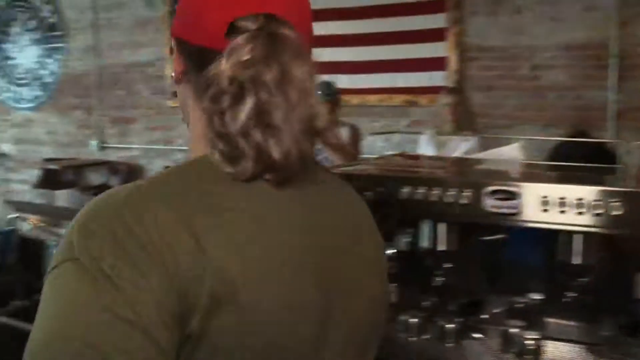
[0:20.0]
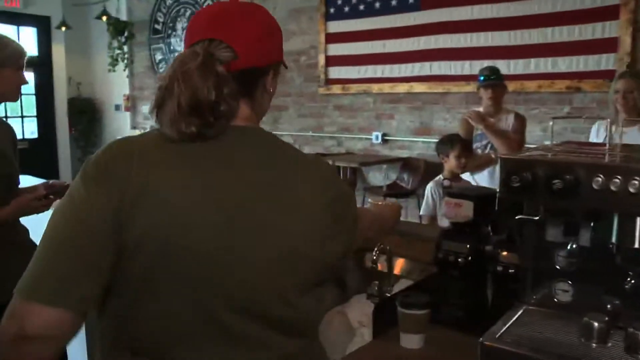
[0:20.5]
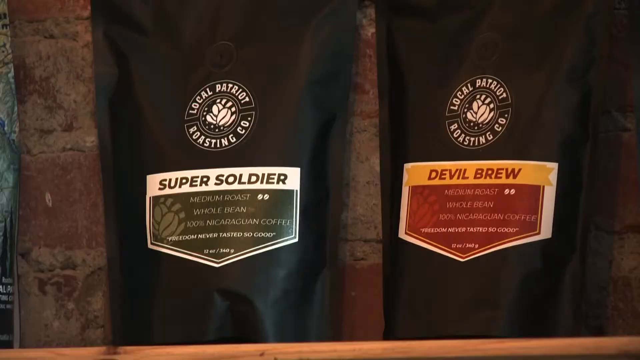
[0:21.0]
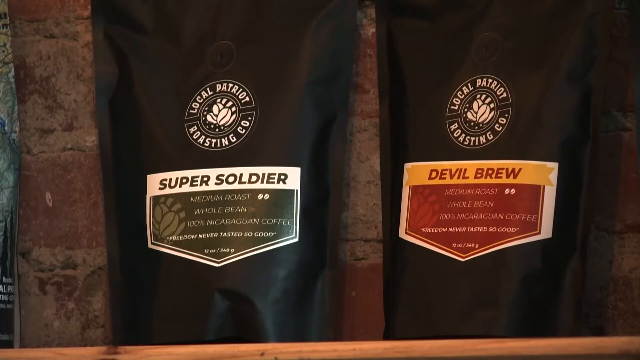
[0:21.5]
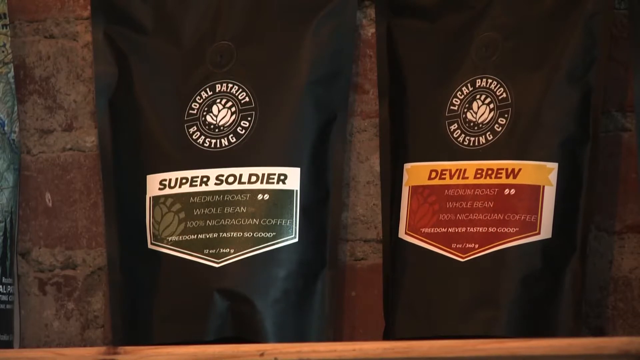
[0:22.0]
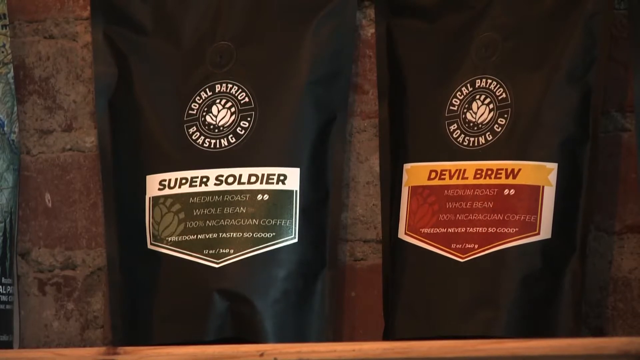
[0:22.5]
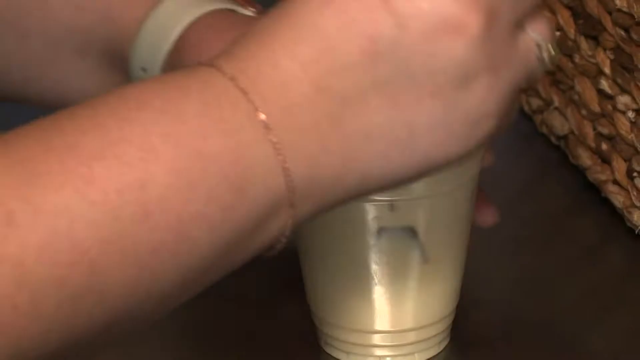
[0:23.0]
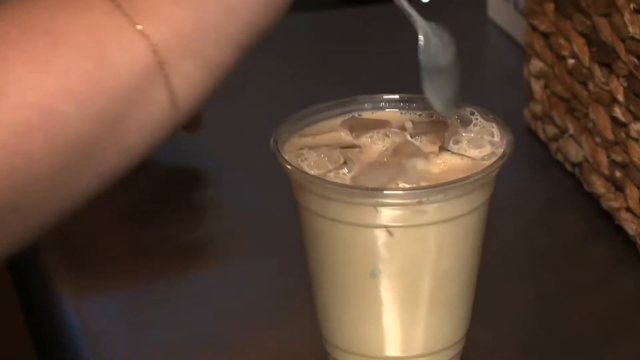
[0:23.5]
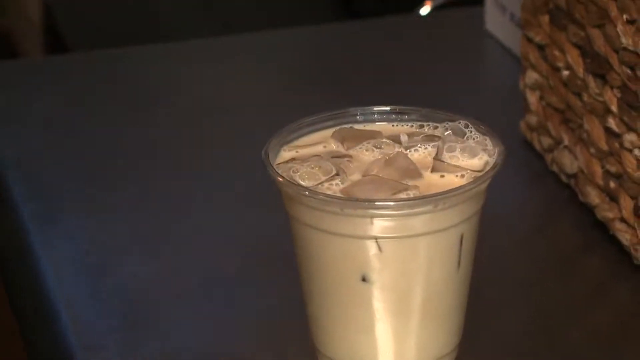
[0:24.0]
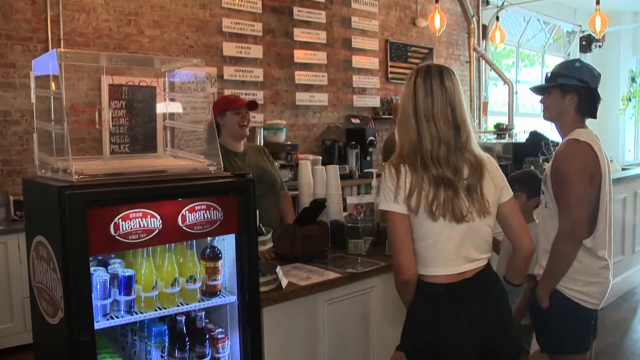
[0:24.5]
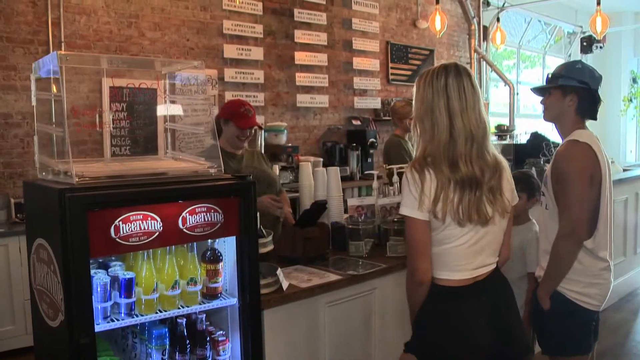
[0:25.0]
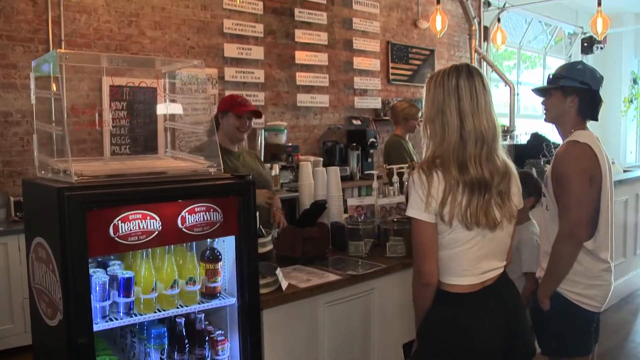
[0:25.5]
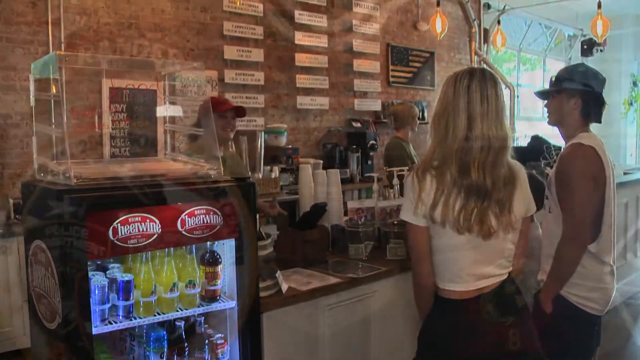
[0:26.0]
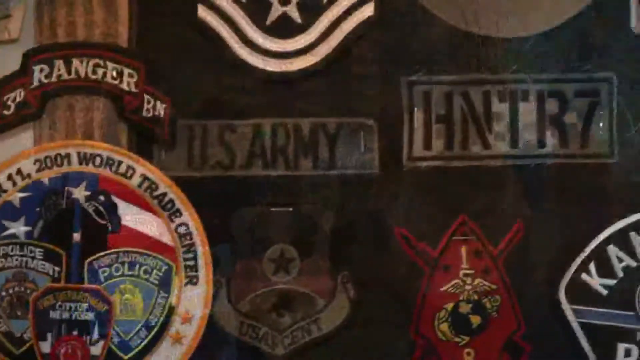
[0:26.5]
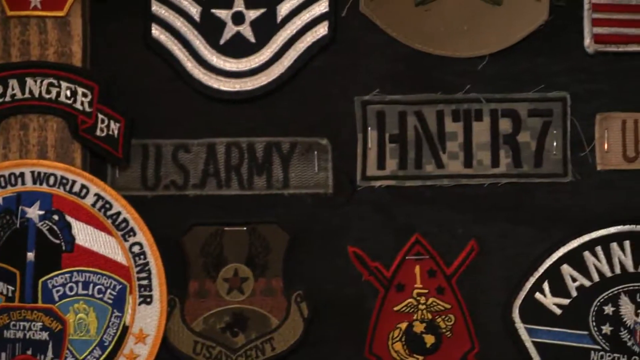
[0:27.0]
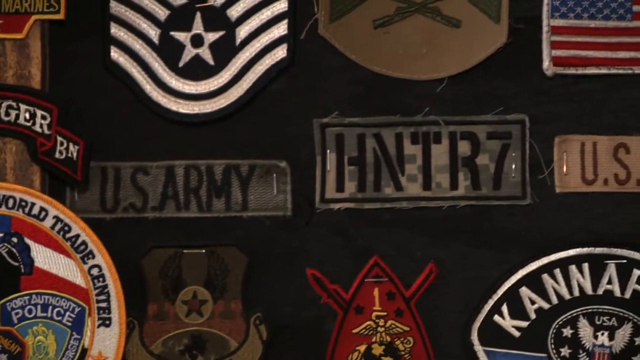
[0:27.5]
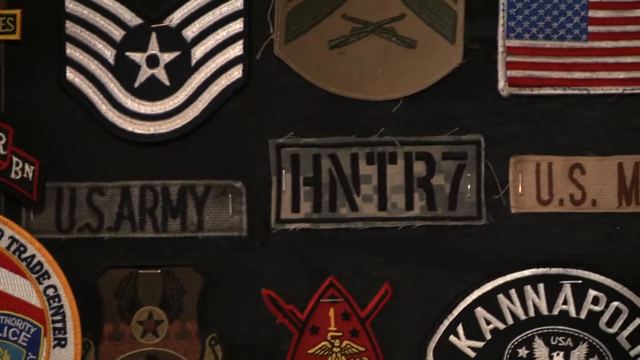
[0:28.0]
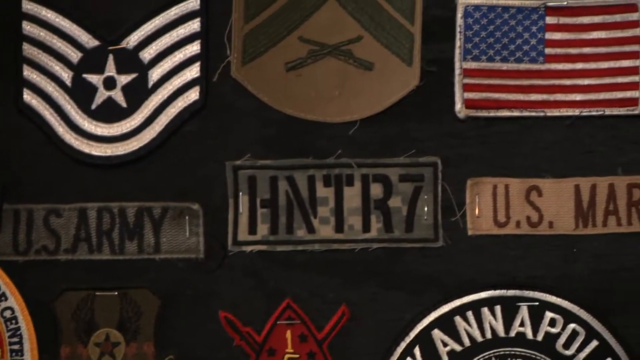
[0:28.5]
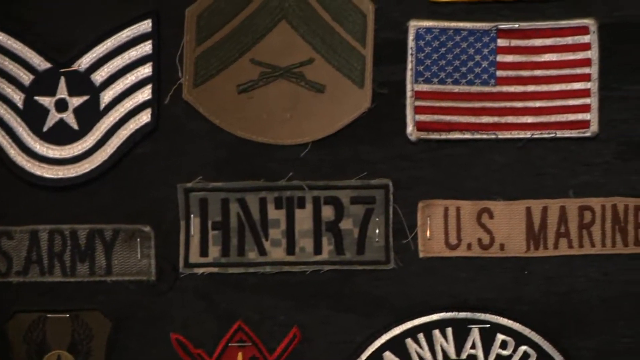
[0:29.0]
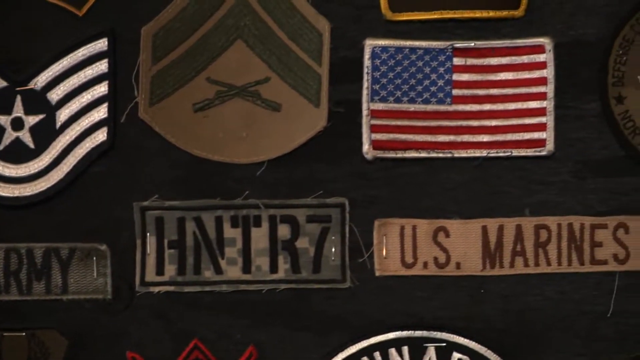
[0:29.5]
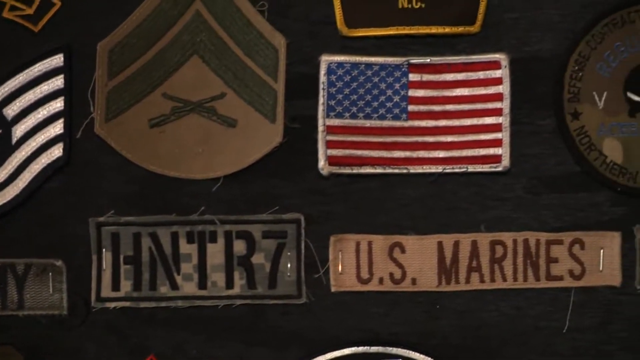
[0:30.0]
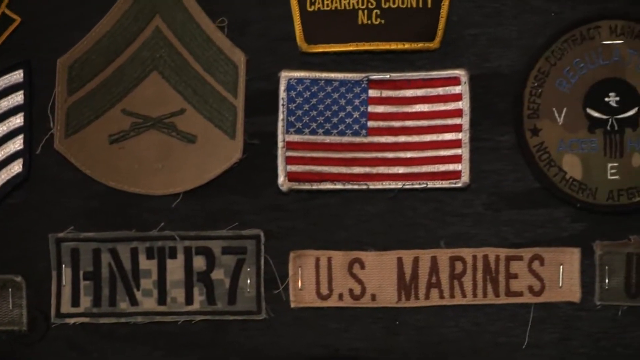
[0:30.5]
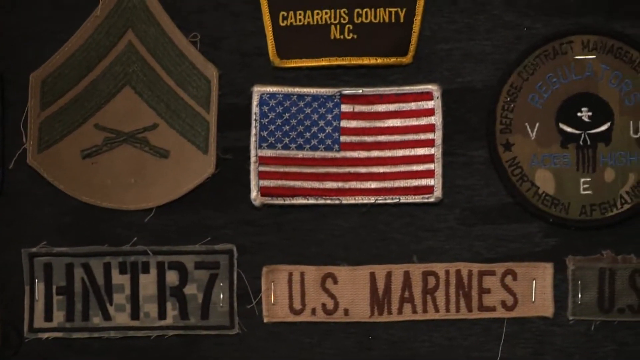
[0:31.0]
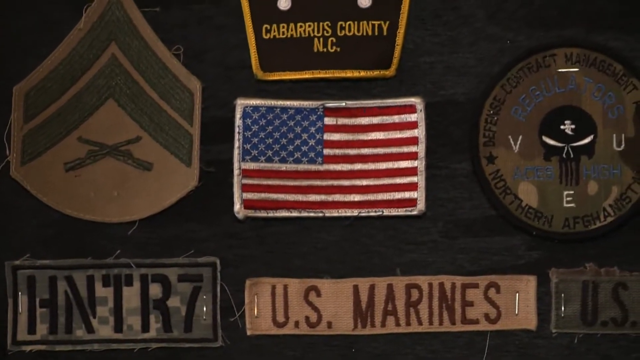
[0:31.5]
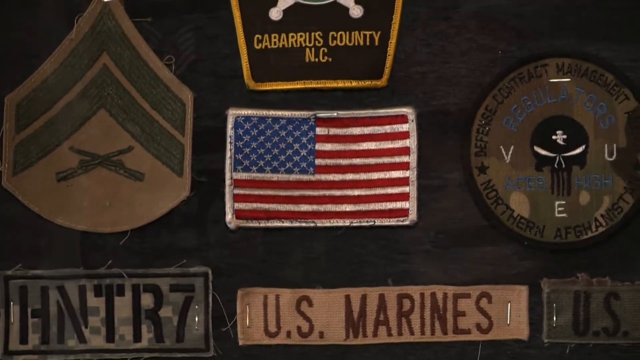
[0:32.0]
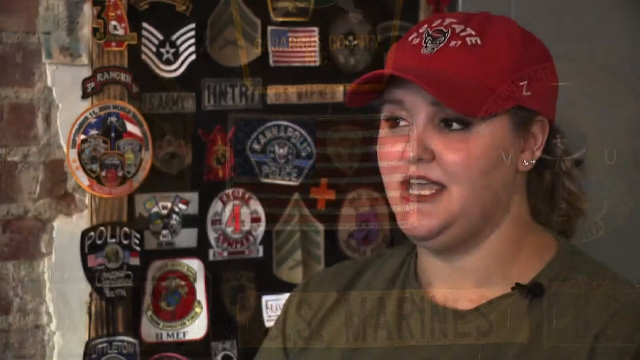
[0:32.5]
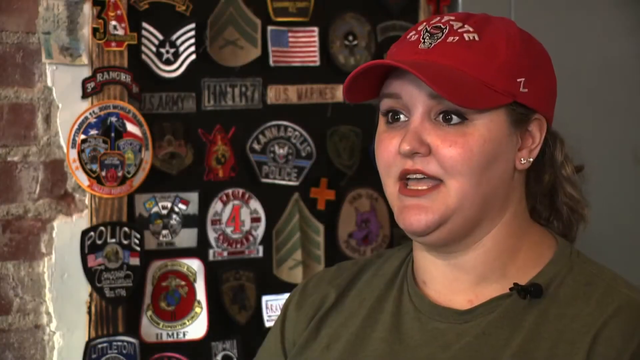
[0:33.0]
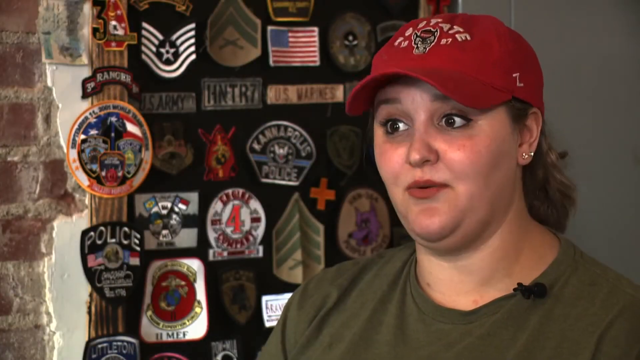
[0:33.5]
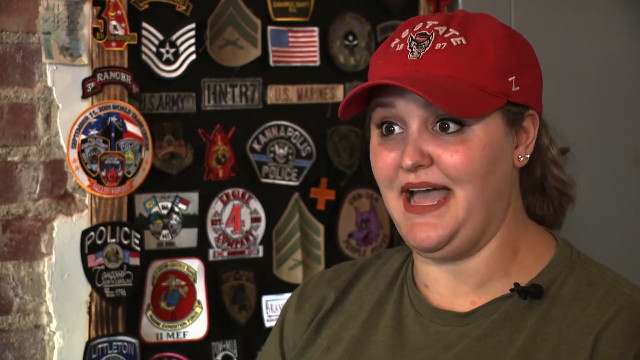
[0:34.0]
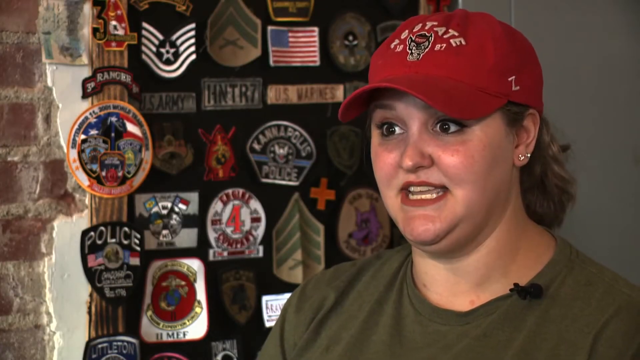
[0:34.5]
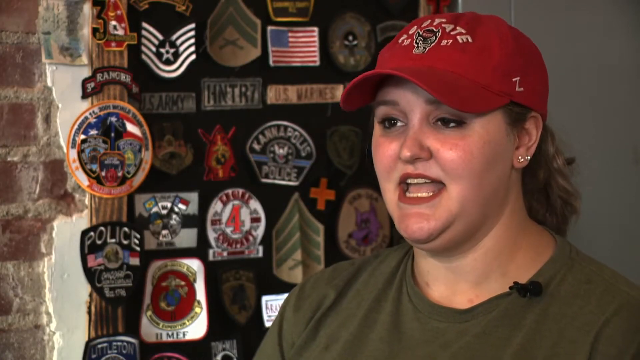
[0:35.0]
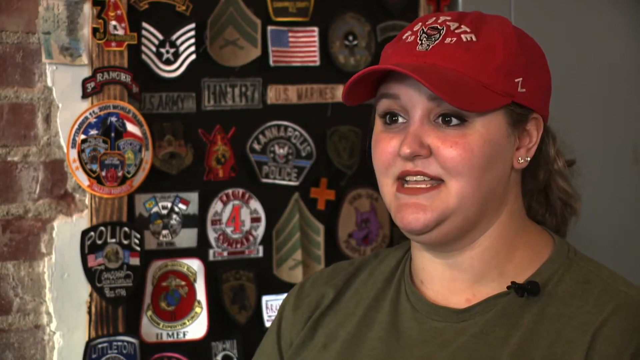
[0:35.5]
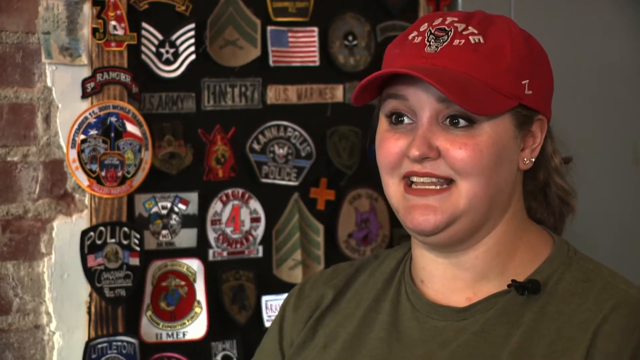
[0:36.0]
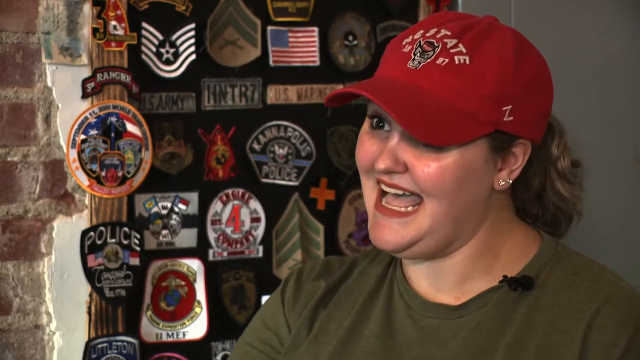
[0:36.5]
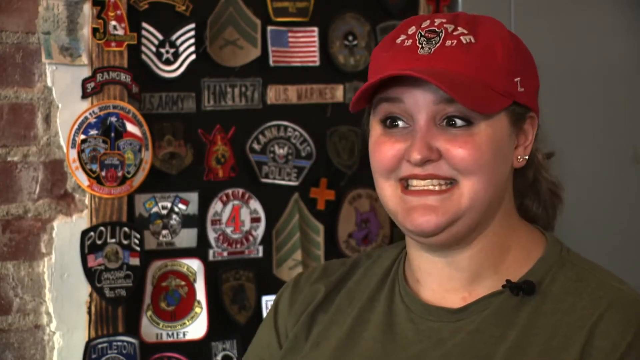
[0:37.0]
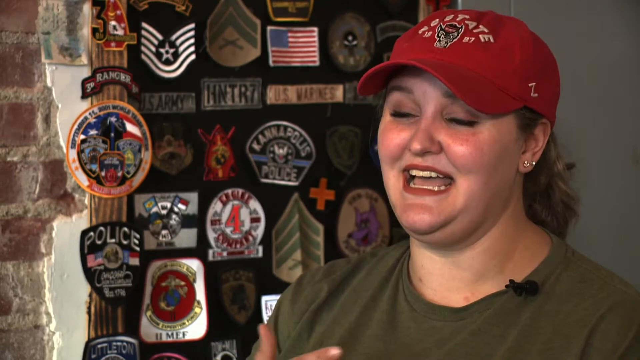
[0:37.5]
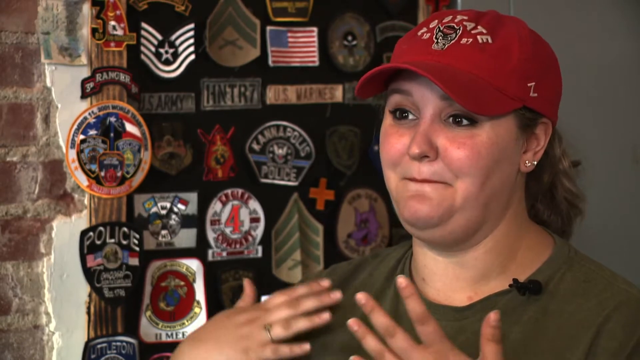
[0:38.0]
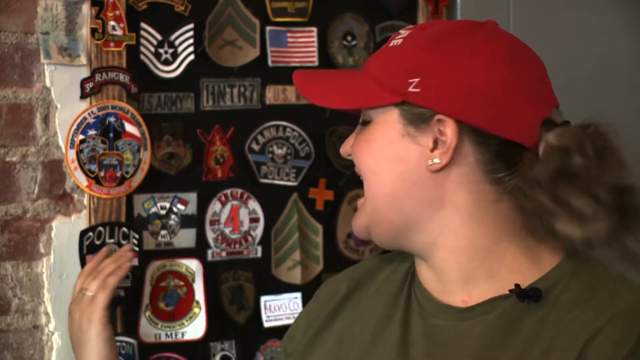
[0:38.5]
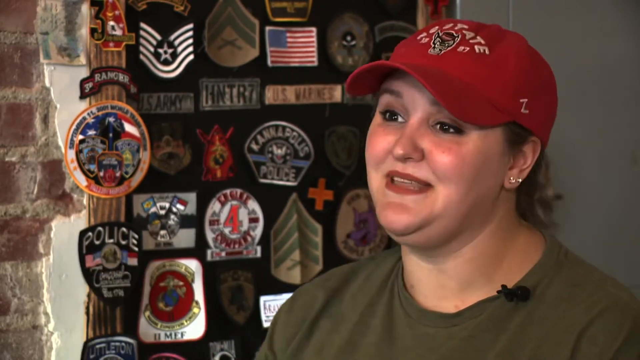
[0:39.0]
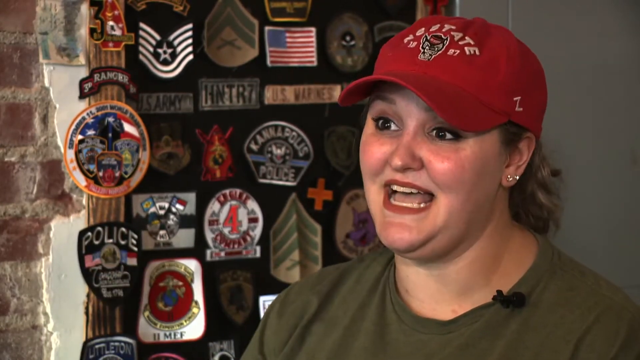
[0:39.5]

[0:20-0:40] In the coffee shop, the woman continues serving coffee to customers. The shop's own coffee brand, Local Patriotic Roasting, is shown: one coffee is called Super Soldier medium roast whole bean, and another is called Devil Brew, also a medium roast whole bean. Behind the till, a range of badges is plastered on the wall, including US Army, the American flag, and a police badge. Toward the end, the woman who works at or owns the coffee place is interviewed by the camera person; she wears a red cap.